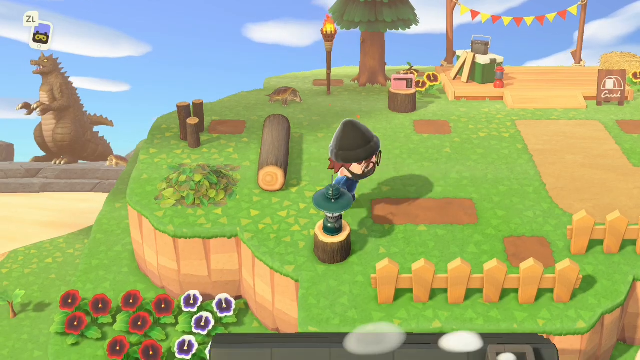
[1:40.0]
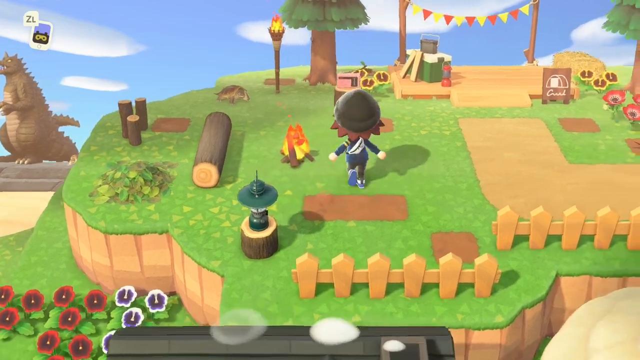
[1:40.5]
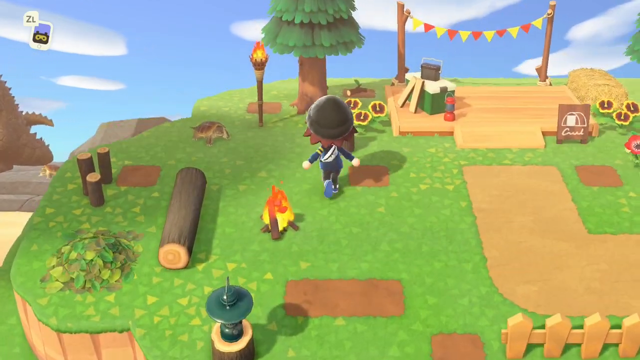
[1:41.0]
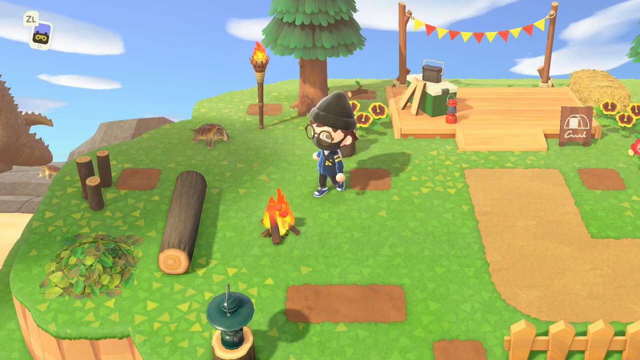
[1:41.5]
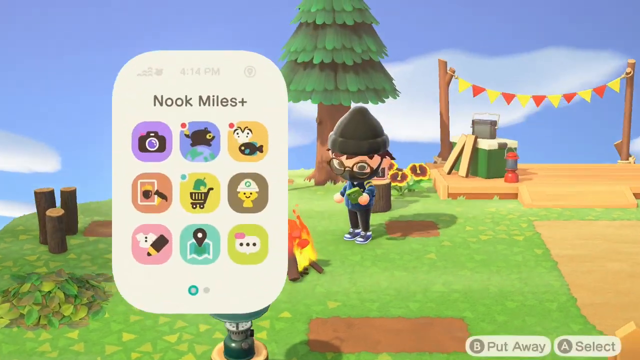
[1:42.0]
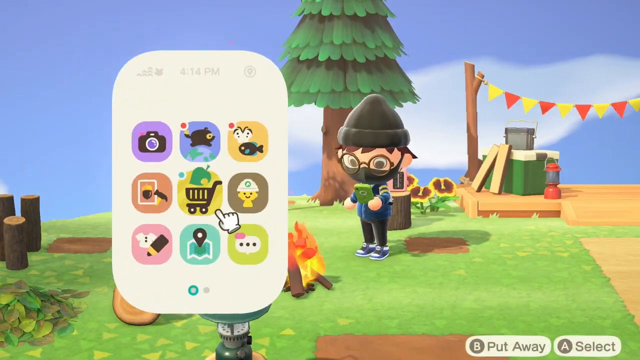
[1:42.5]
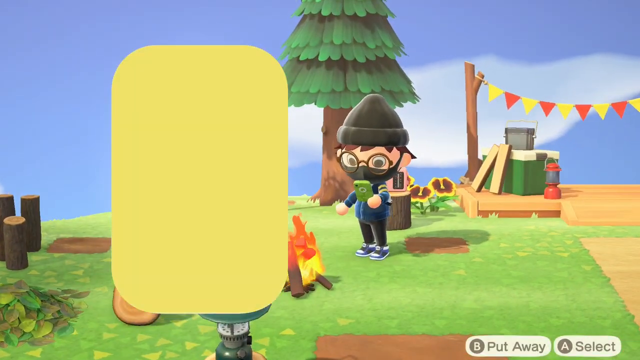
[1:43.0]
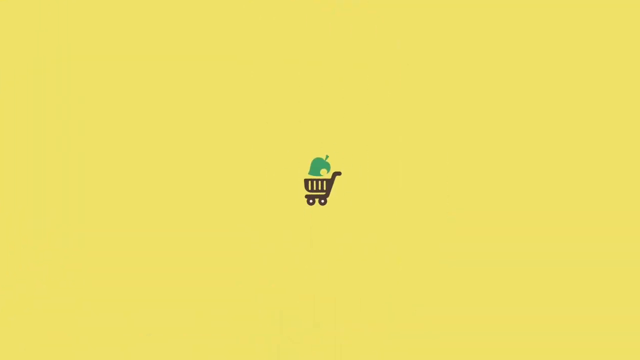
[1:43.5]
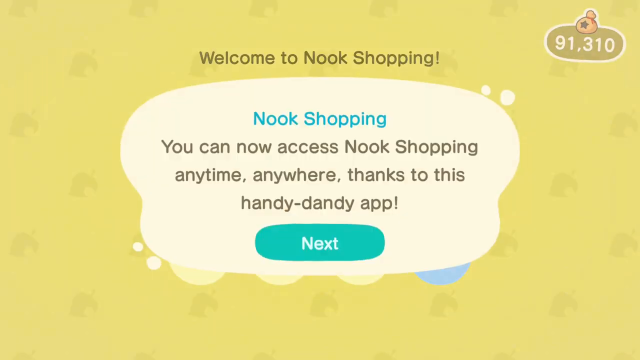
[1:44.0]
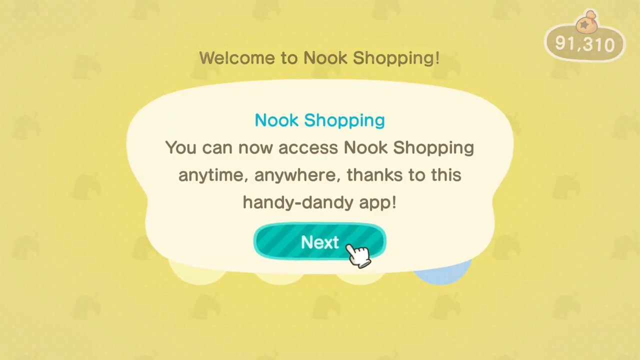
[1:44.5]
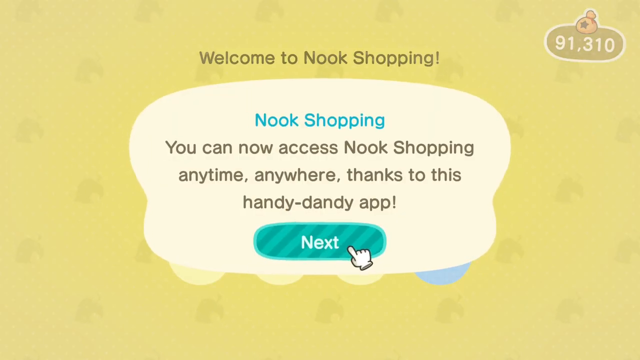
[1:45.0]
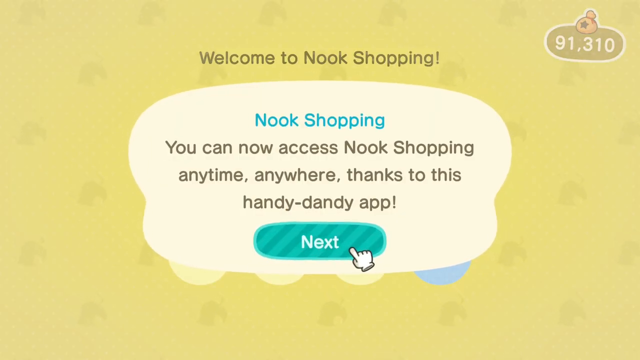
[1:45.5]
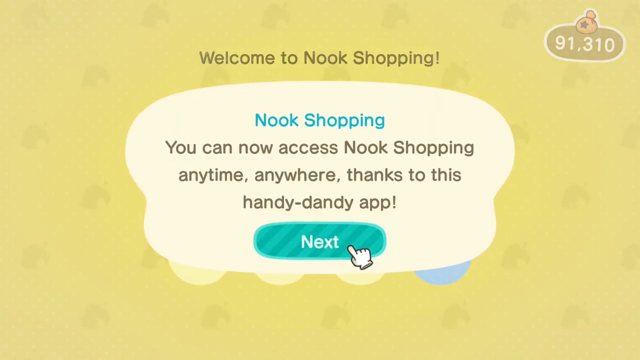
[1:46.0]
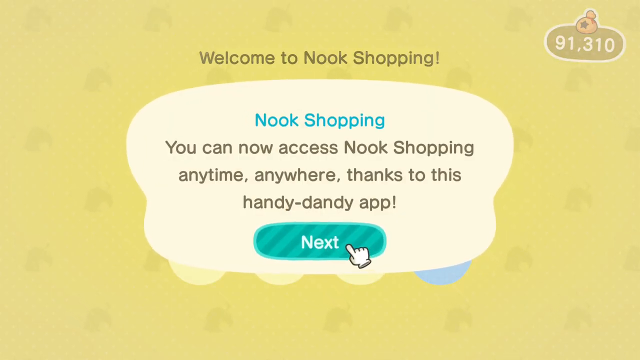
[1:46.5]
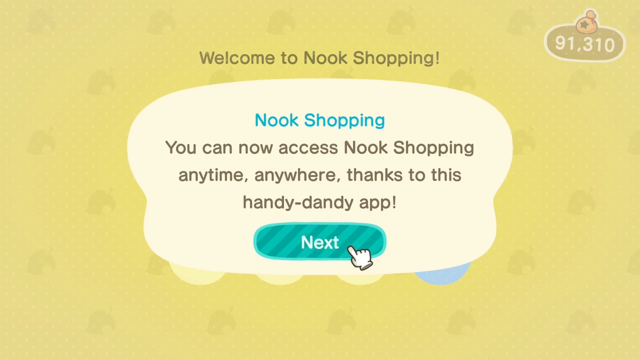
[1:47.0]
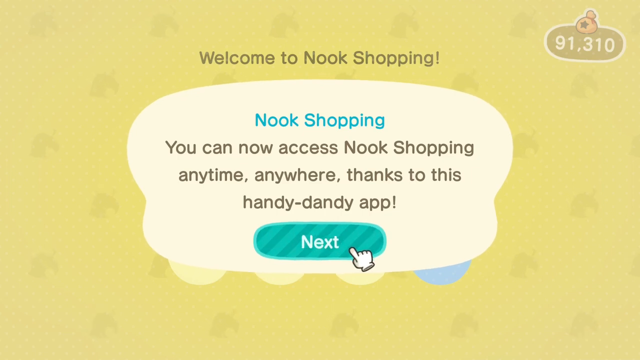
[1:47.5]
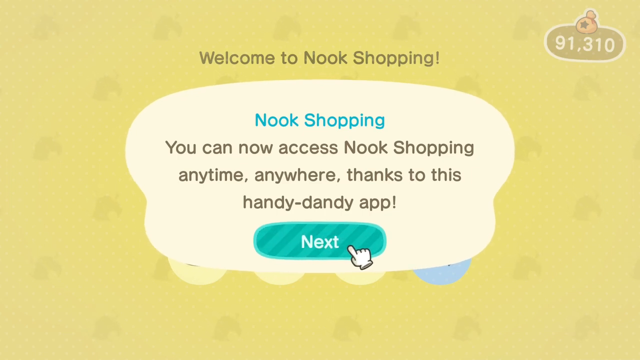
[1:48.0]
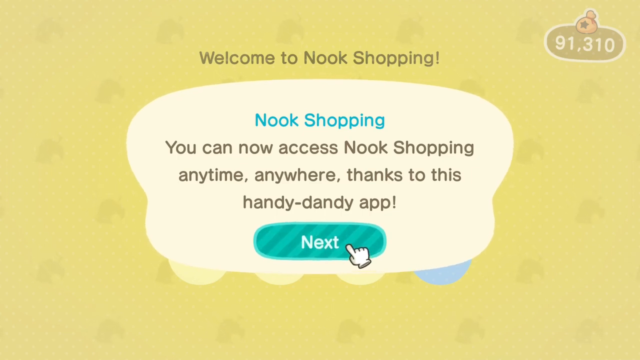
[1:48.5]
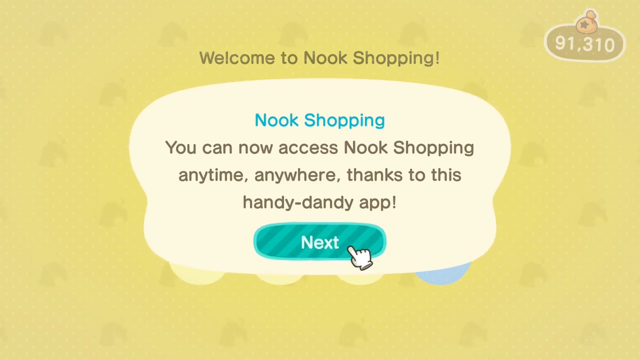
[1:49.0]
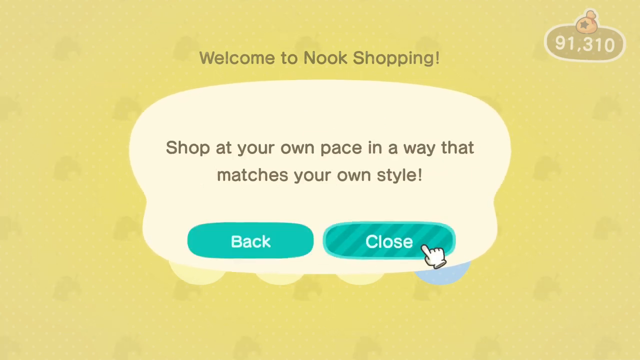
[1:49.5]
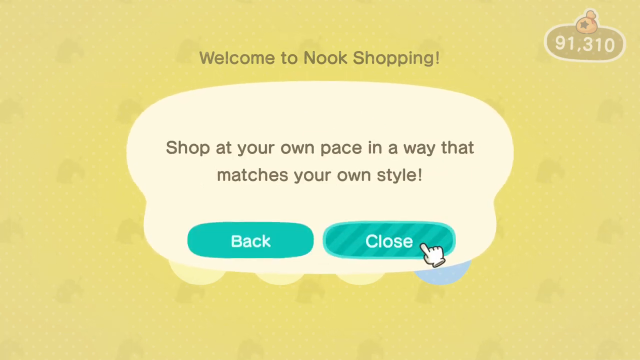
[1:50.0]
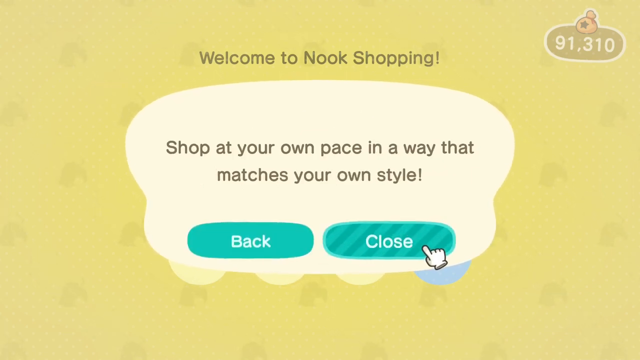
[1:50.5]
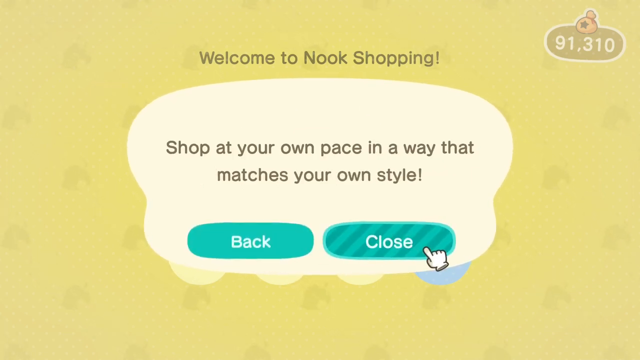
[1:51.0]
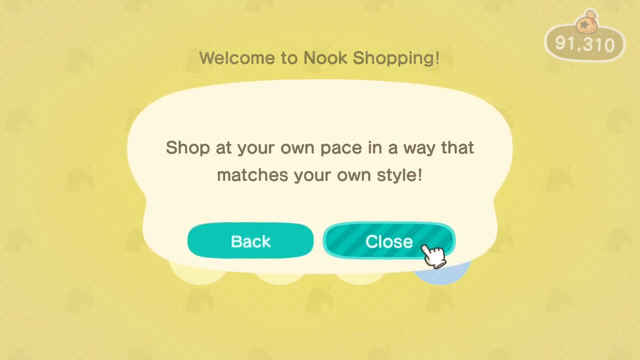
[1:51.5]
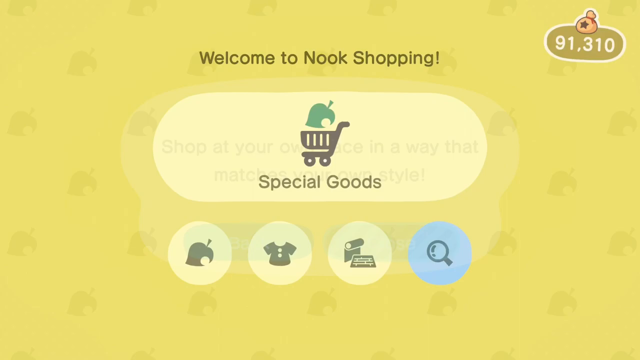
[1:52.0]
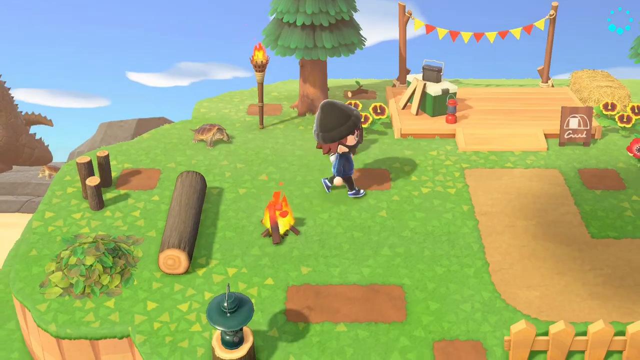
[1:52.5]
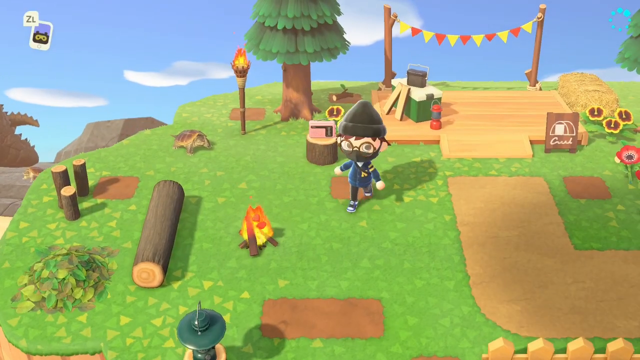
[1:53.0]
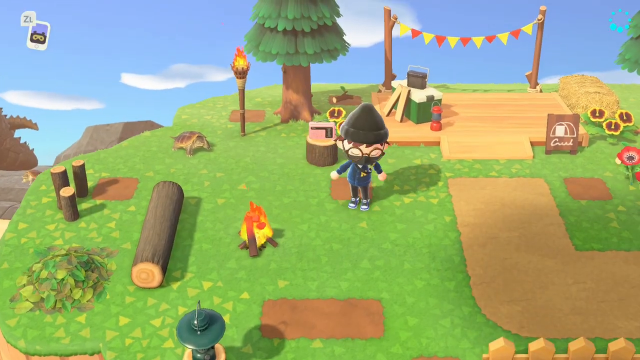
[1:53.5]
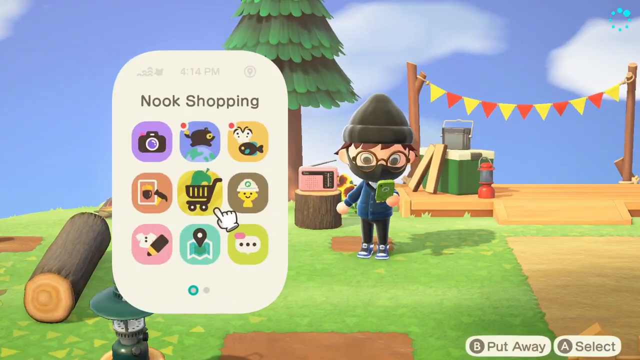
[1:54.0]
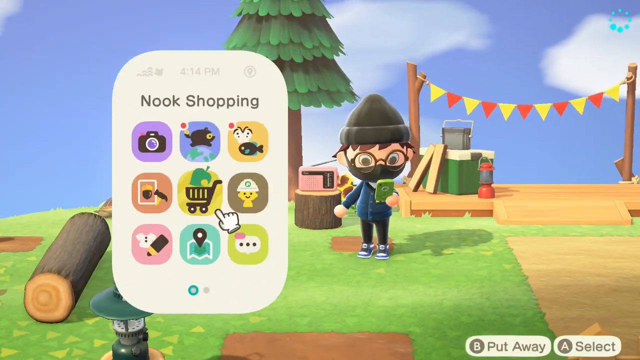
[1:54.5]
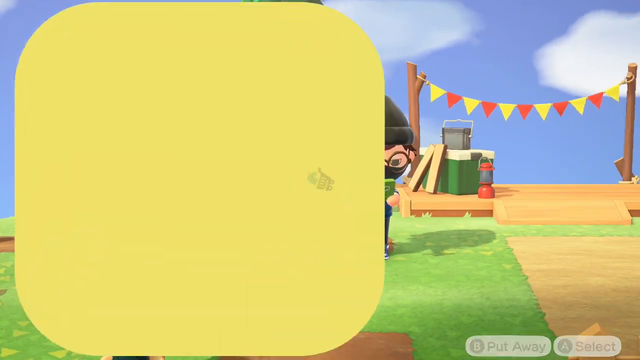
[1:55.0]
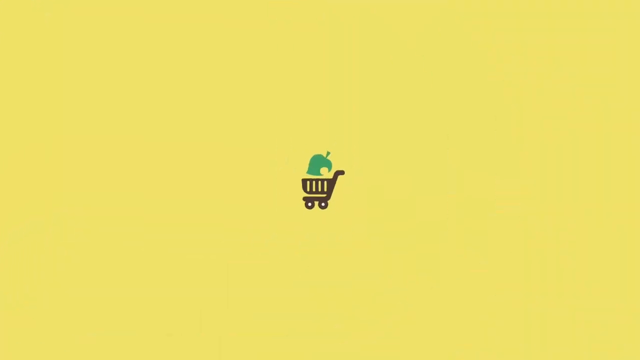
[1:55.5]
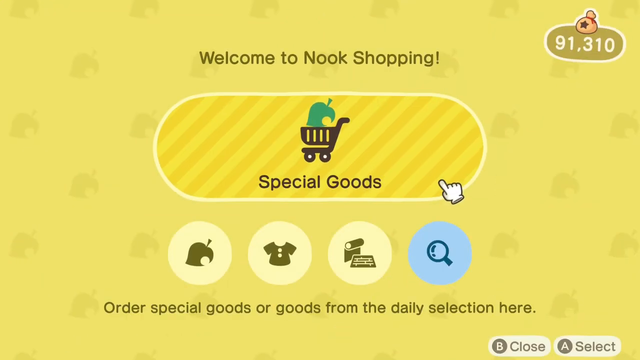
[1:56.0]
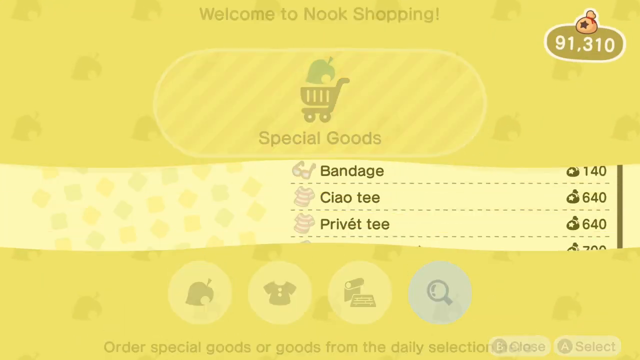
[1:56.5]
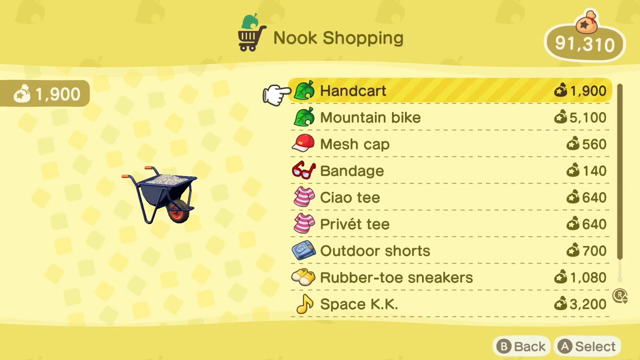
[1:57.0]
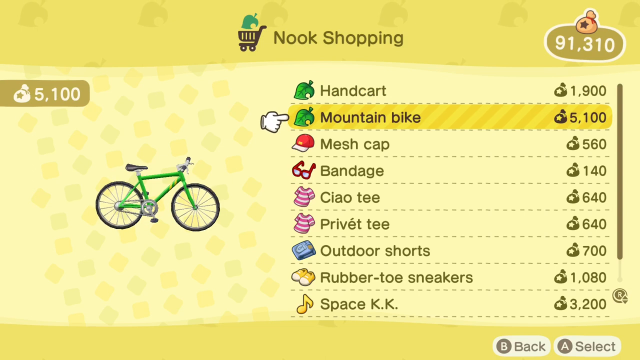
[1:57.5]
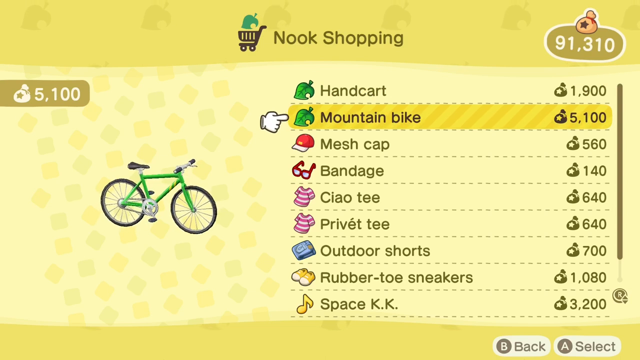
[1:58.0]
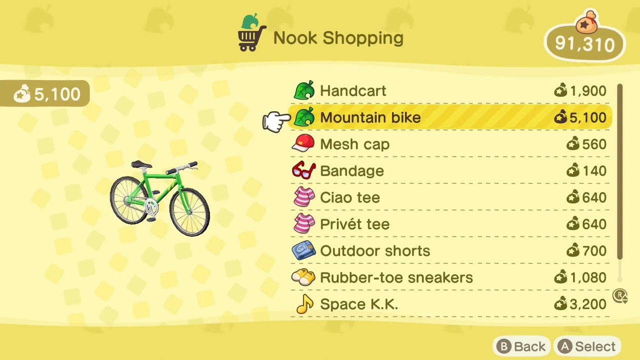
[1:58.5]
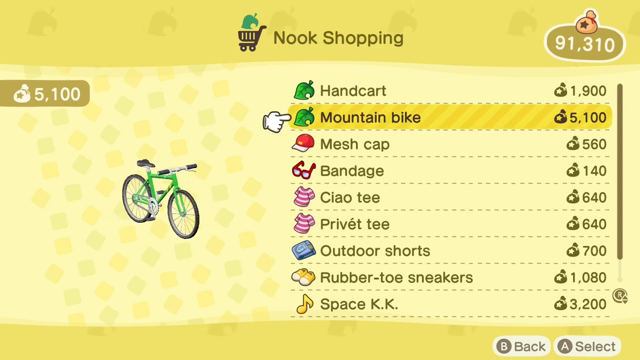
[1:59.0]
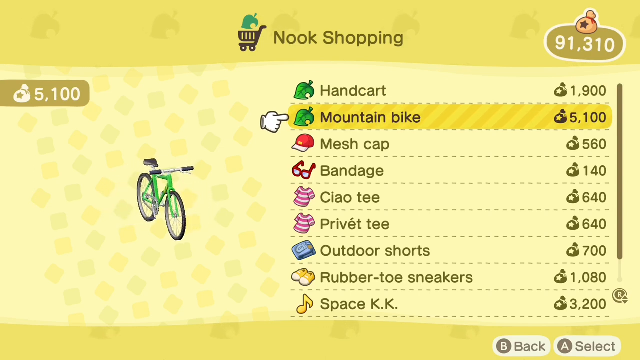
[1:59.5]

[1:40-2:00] The character is seen walking around their island again, where different flowers have been planted, along with a campfire and a log bench. The character takes out their phone, which has a green case, navigates to the center where the Nook Shopping app was installed, and opens it. A pop-up appears saying they can access the app anywhere, anytime, with a next button underneath that is clicked. The currency is shown at 91,310 bells. The shopping app has the same yellow leaf-pattern background. The next pop-up says "shop at your own pace in a way that matches your own style." They close the pop-up and exit the app, then go back to their settings and reopen it. They return to the Nook Shopping home screen, where they look at purchasing a mountain bike.